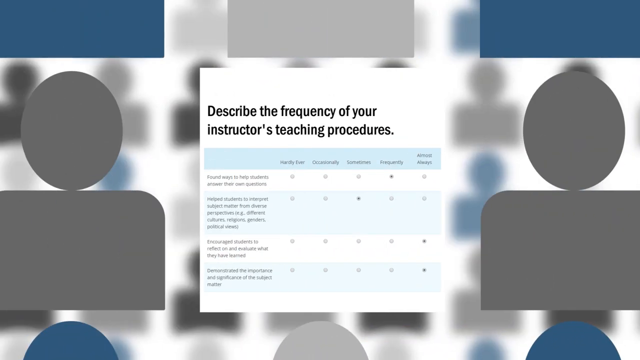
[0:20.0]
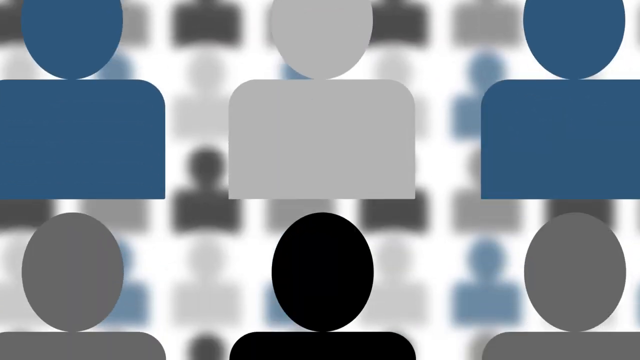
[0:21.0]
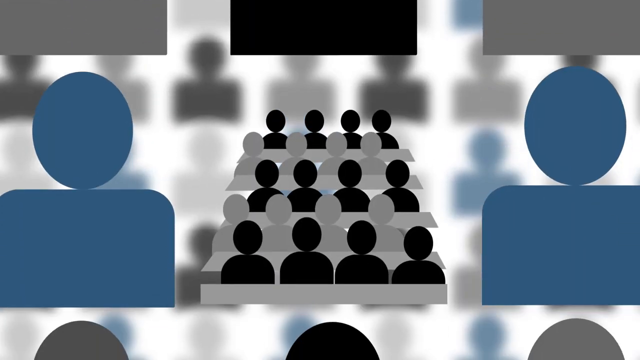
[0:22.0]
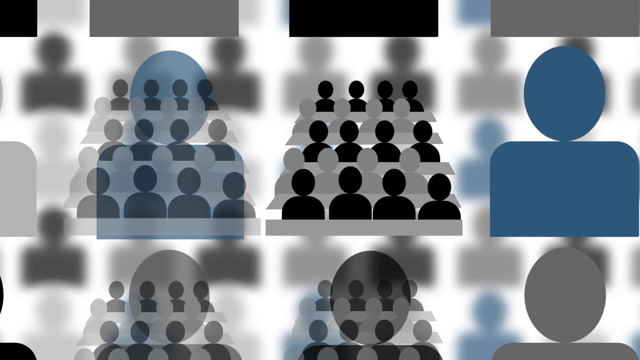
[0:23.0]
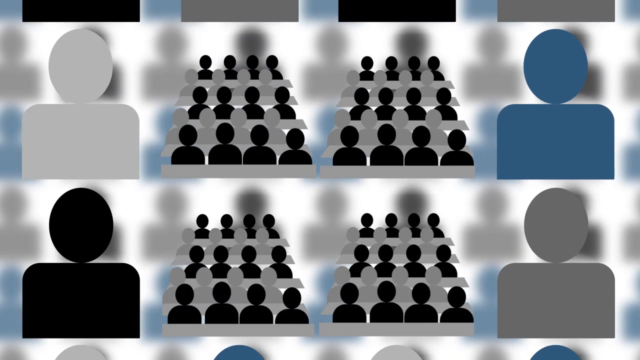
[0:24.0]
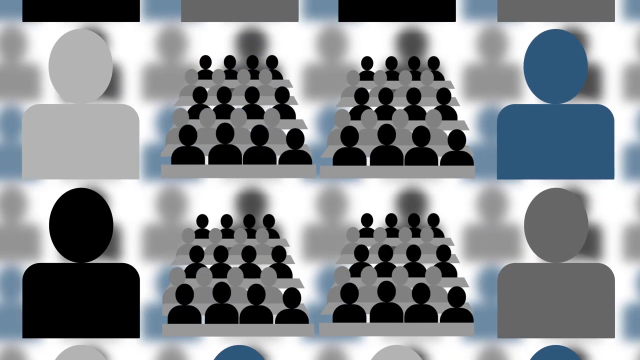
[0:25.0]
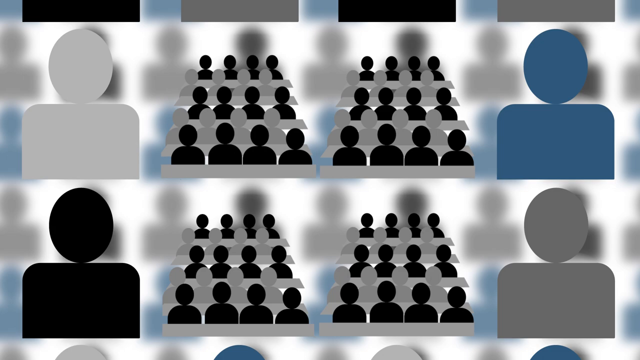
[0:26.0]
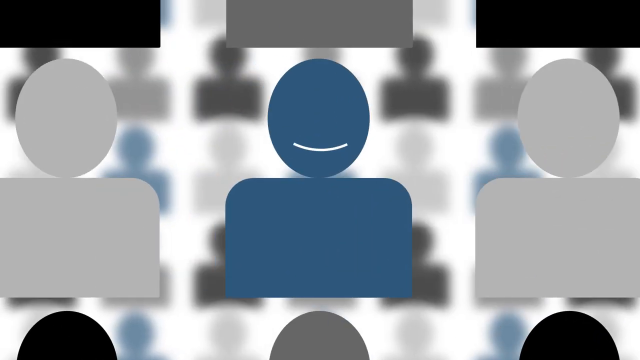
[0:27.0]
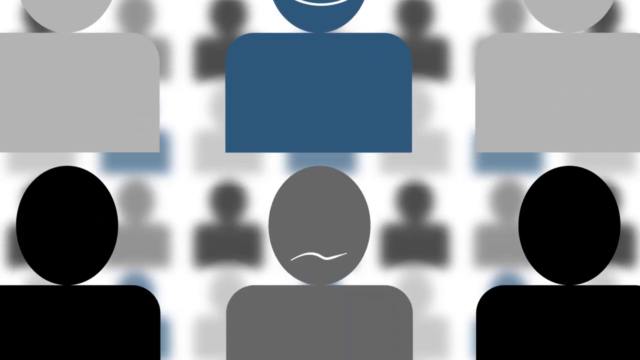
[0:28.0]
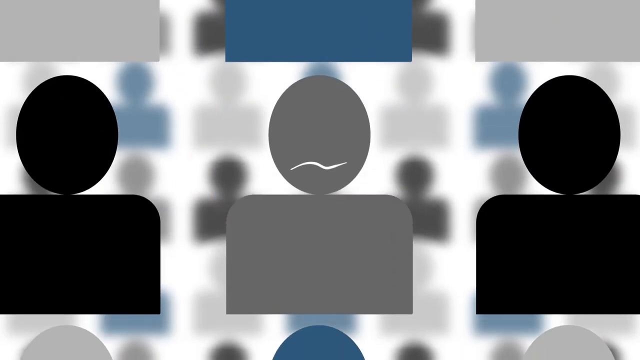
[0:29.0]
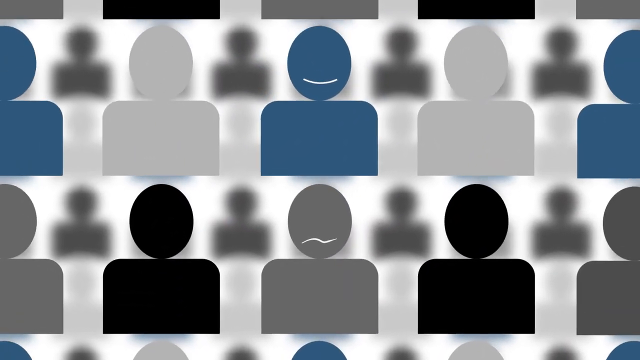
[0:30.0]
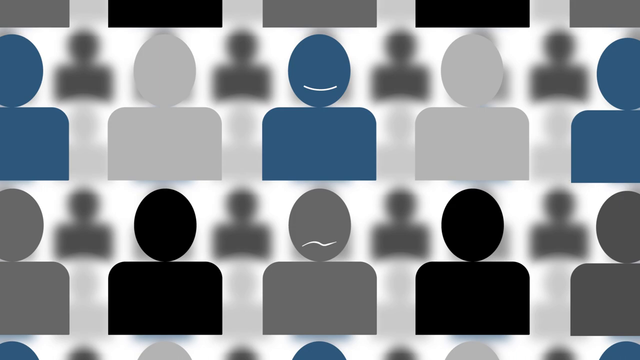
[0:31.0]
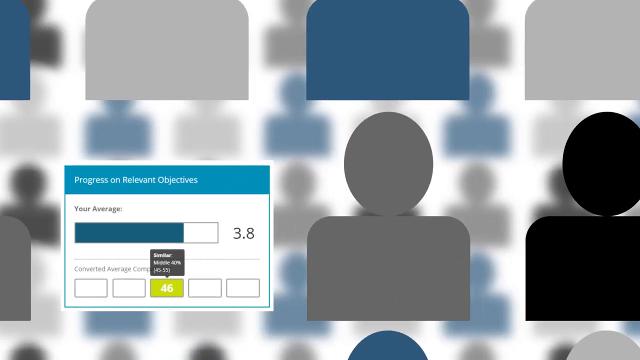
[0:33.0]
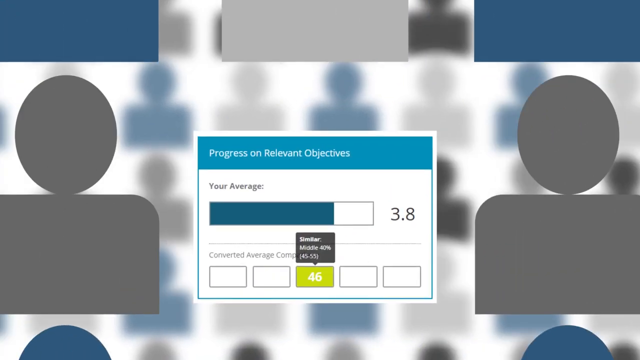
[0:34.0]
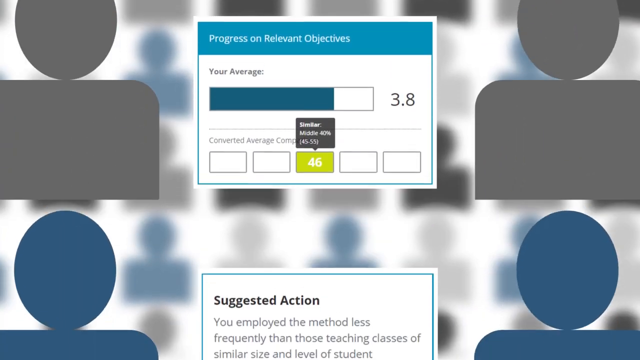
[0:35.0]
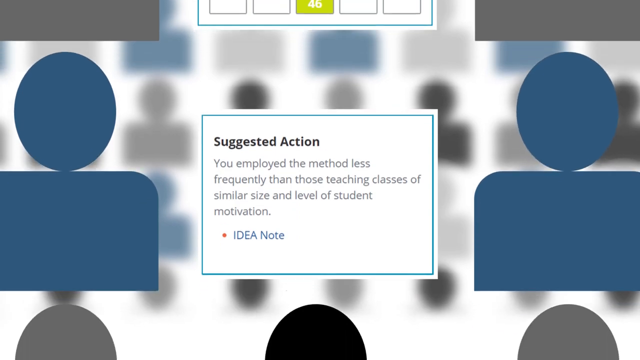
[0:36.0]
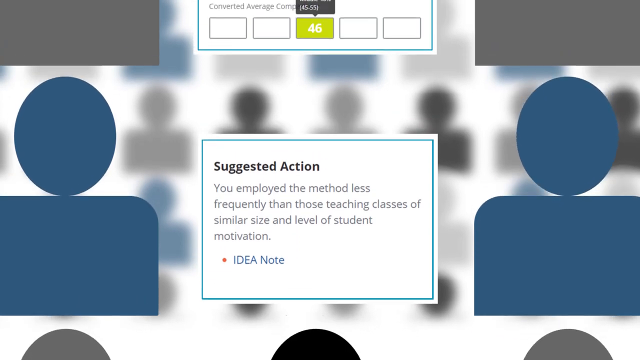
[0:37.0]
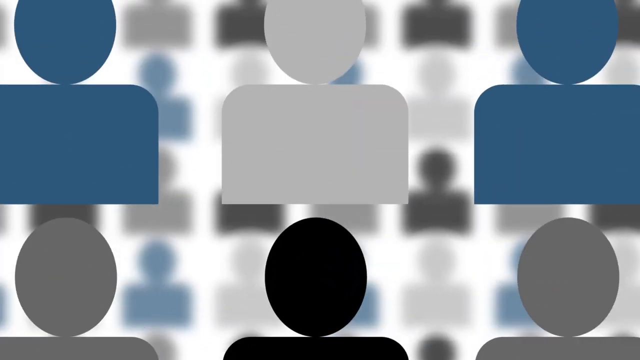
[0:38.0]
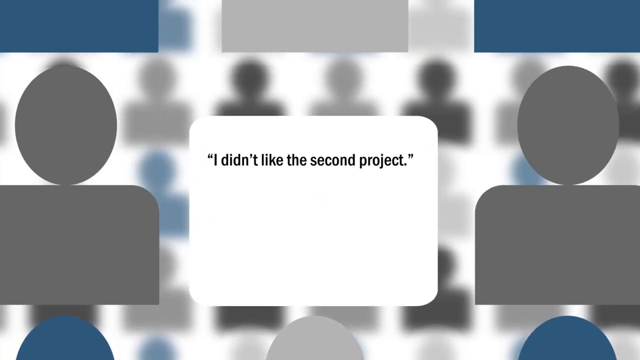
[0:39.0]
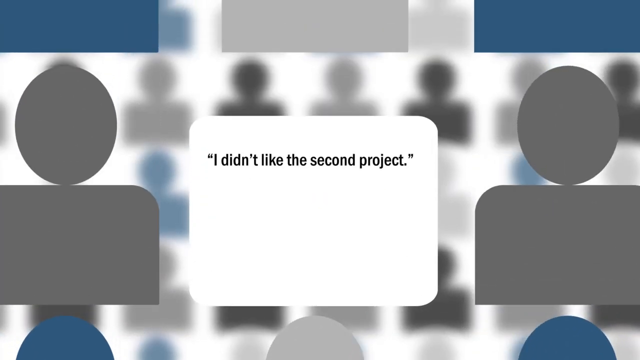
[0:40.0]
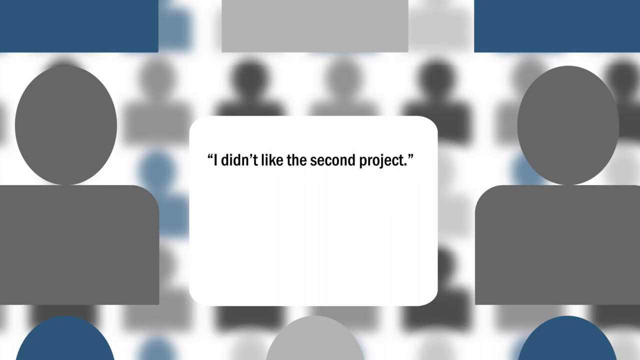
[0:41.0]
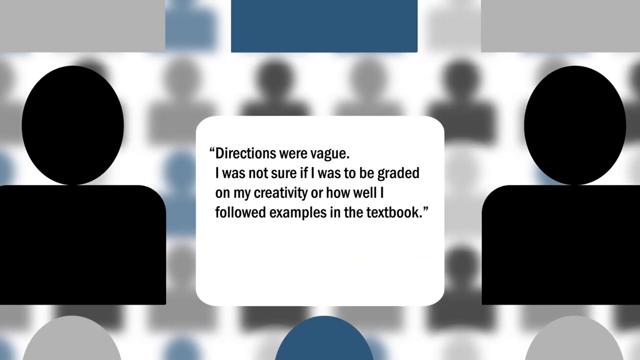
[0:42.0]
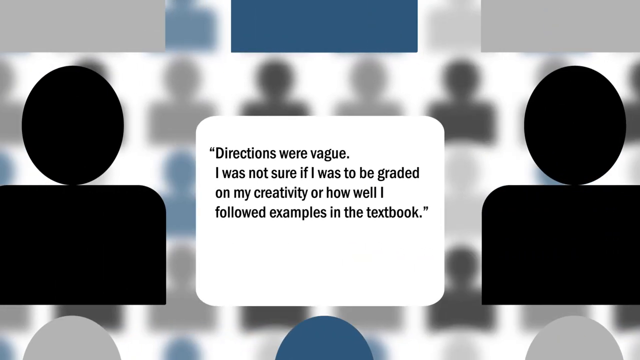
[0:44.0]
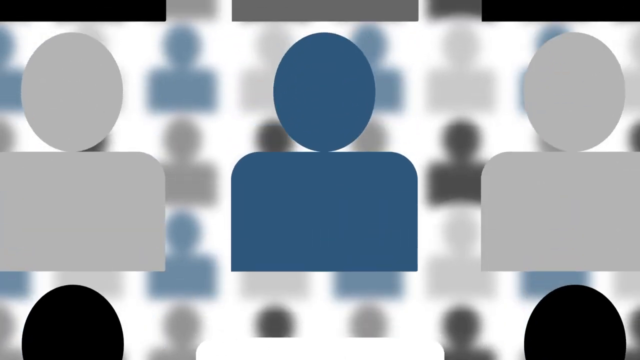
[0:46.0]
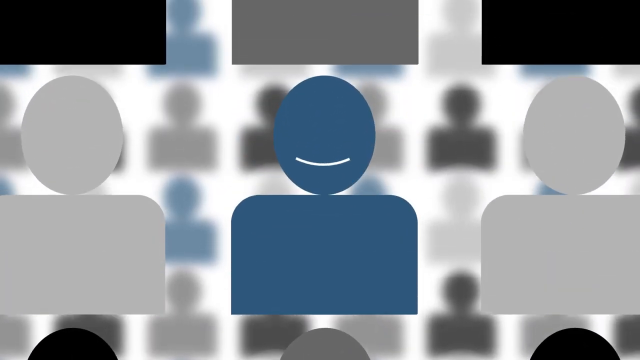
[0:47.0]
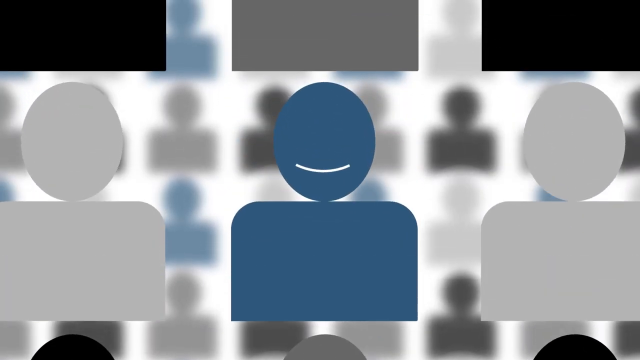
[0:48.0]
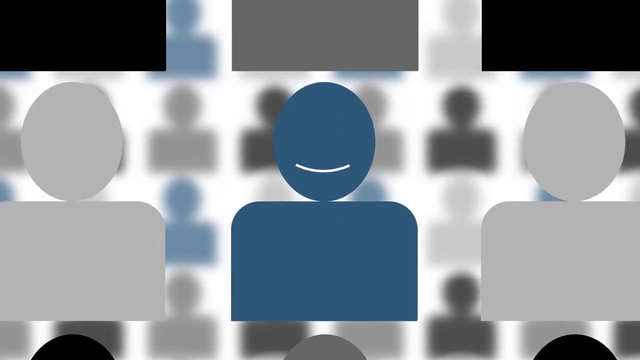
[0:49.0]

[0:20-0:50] Following "describe the frequency of your instructor's teaching procedures," groups of head and shoulders appear instead of individual head-and-shoulder shots, apparently meant to represent students in a classroom. The view then zeroes back out to the head-and-shoulder shots. One figure has a smile and the next has a frown. What looks like evaluations of what the teacher is doing follow, then comments apparently made by students pop up on the screen, seemingly a little critical of the teacher: "progress on relevant objectives," "you employed the method less frequently," "I didn't like the second project," and "directions were vague. I was not sure if I was to be graded on my creativity or how well I followed the textbook." The section ends with one of the silhouette figures with a smile on its face.